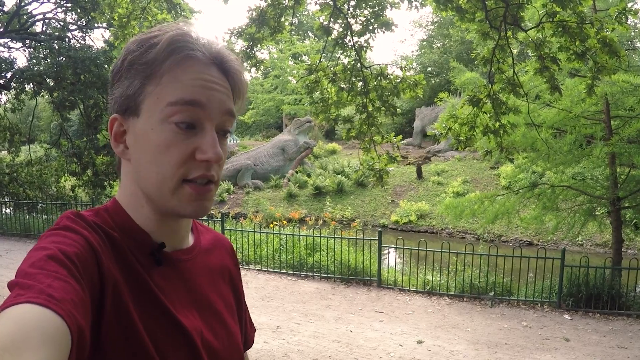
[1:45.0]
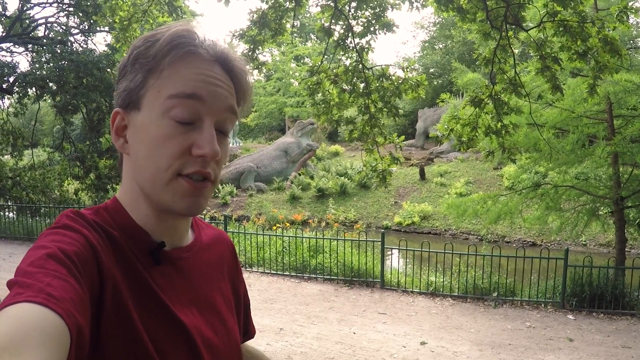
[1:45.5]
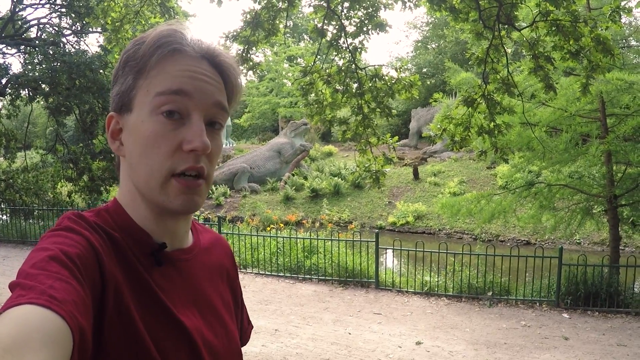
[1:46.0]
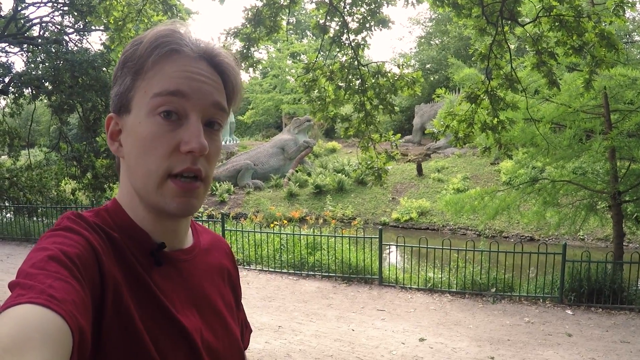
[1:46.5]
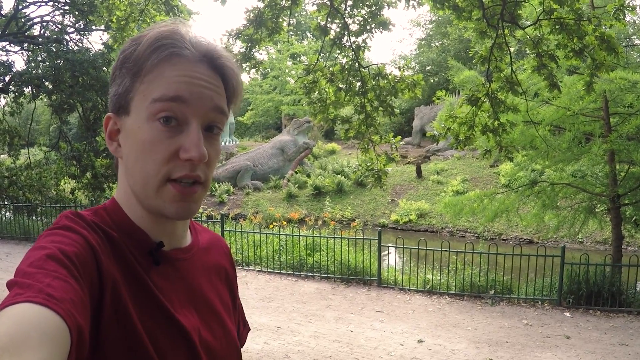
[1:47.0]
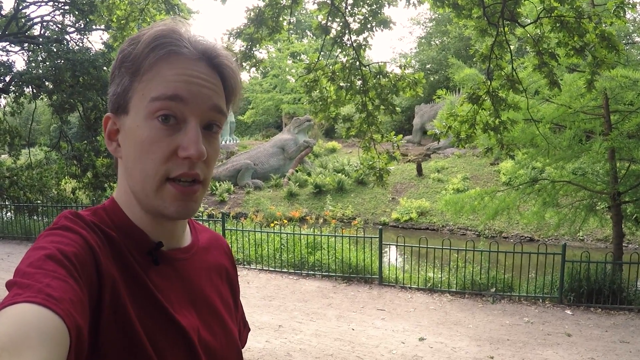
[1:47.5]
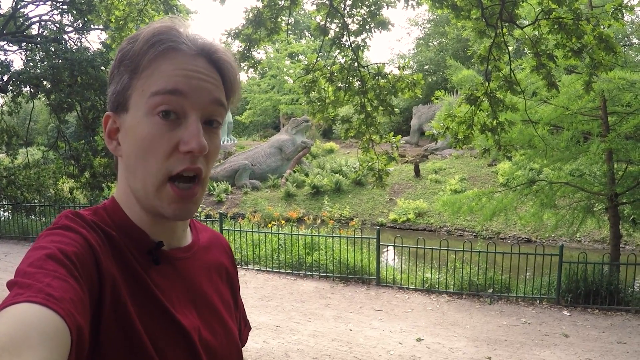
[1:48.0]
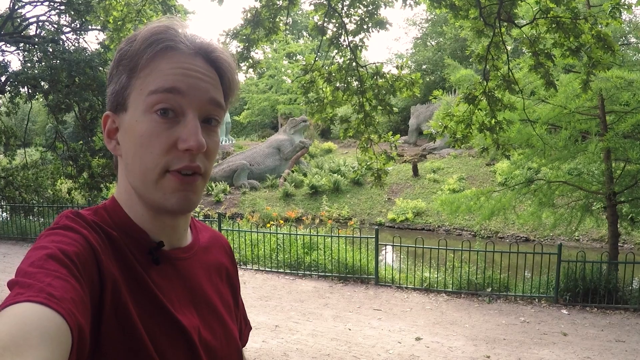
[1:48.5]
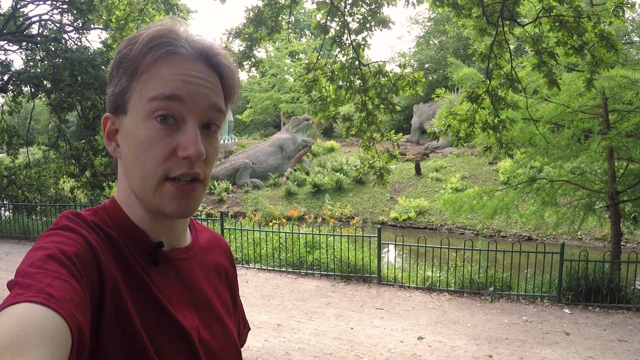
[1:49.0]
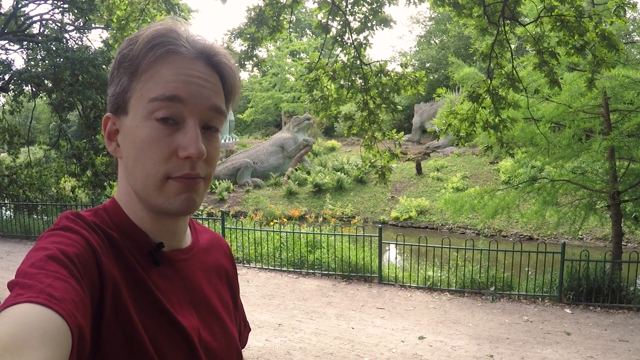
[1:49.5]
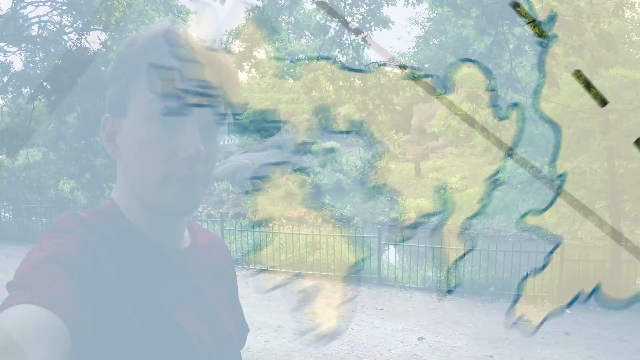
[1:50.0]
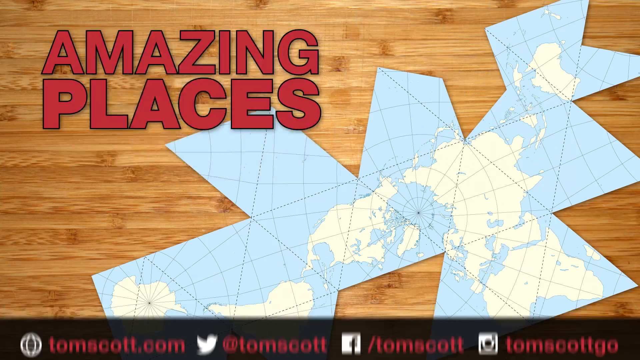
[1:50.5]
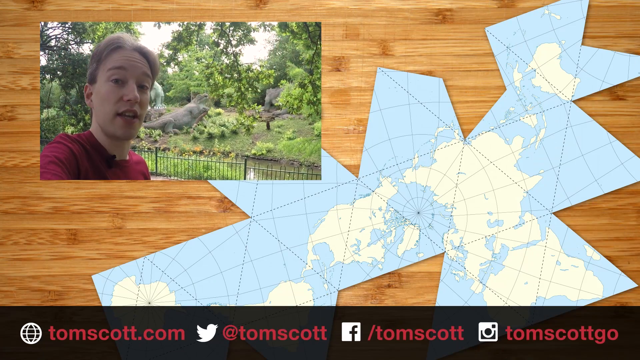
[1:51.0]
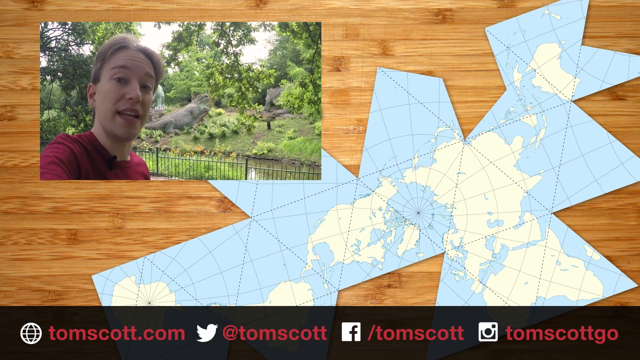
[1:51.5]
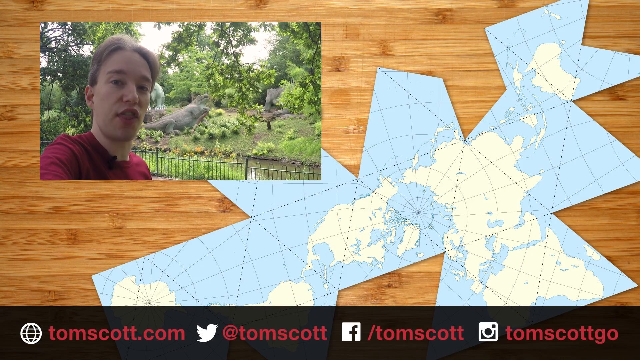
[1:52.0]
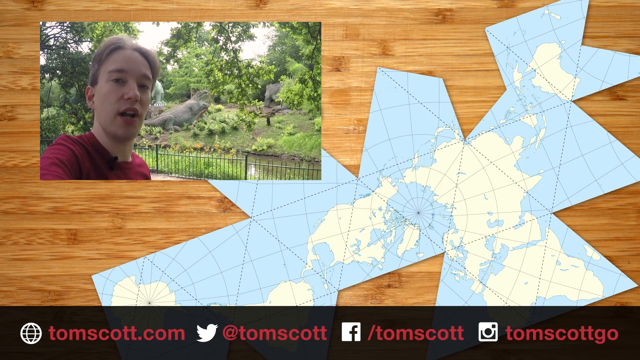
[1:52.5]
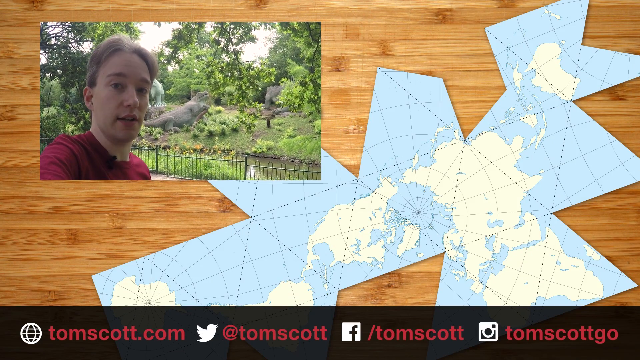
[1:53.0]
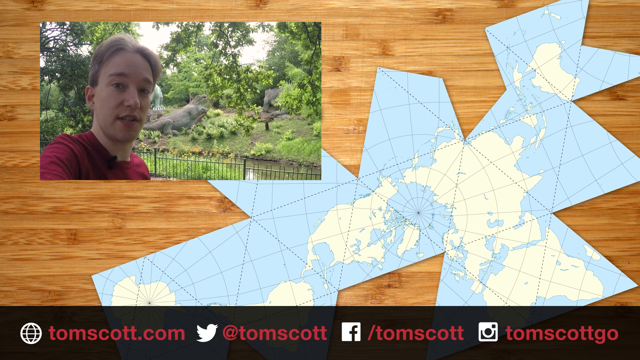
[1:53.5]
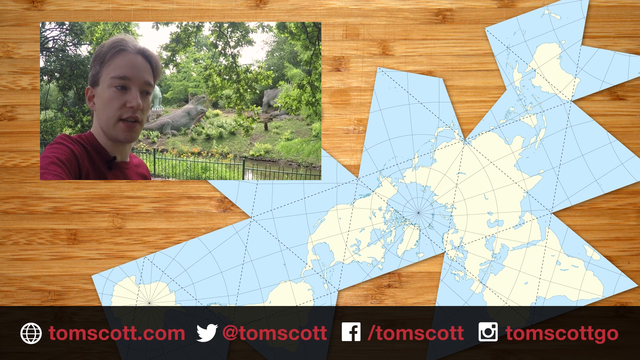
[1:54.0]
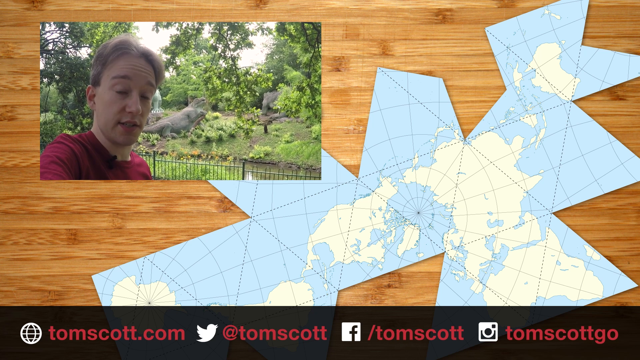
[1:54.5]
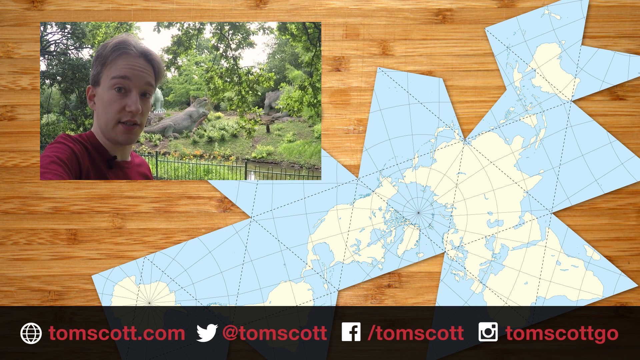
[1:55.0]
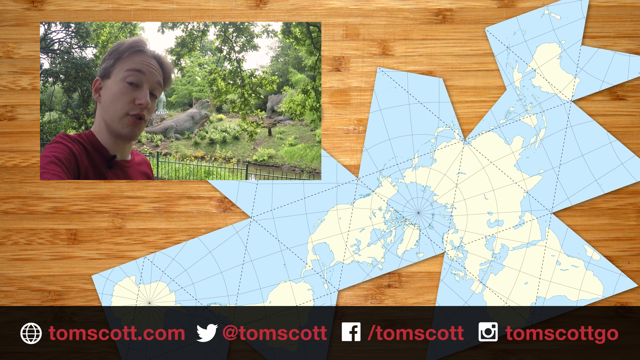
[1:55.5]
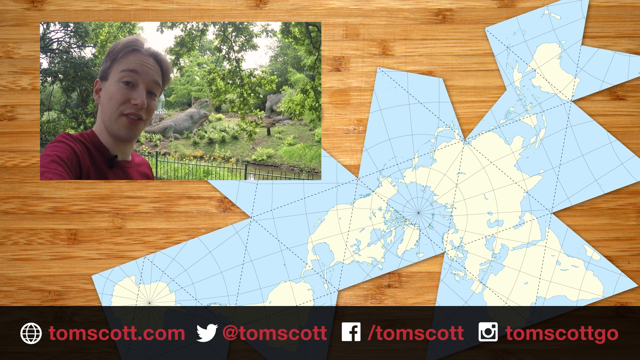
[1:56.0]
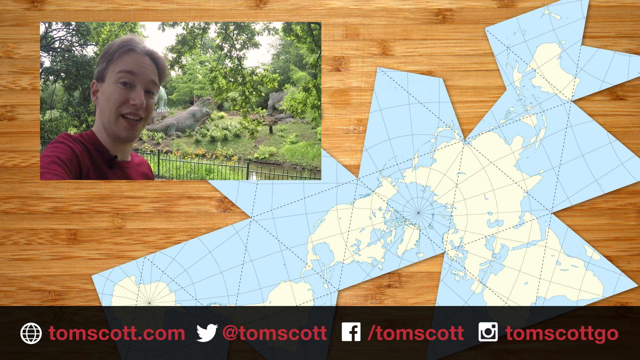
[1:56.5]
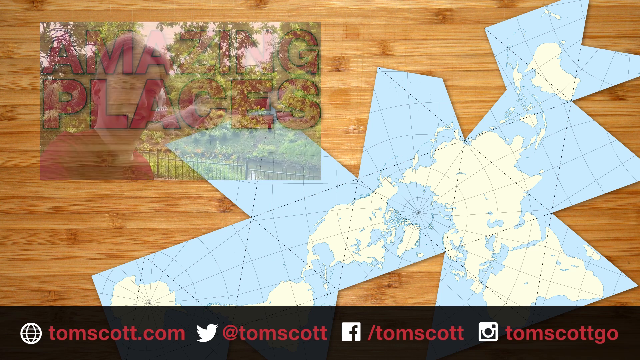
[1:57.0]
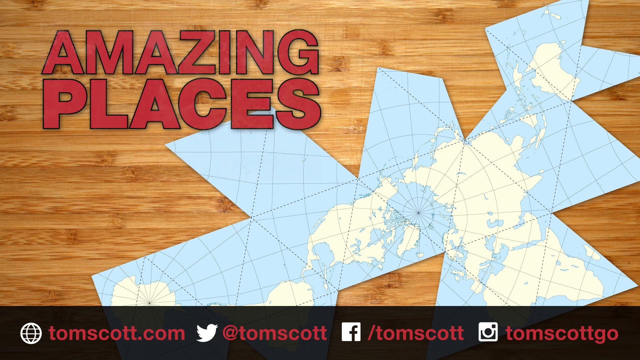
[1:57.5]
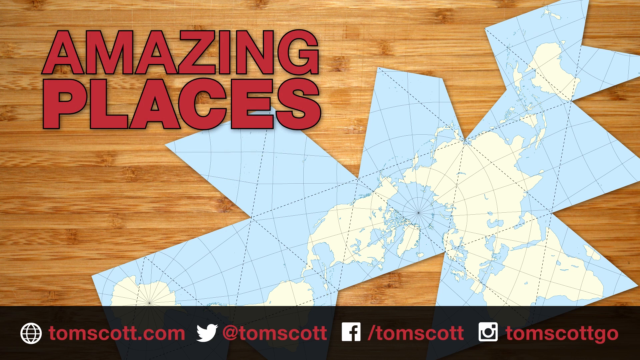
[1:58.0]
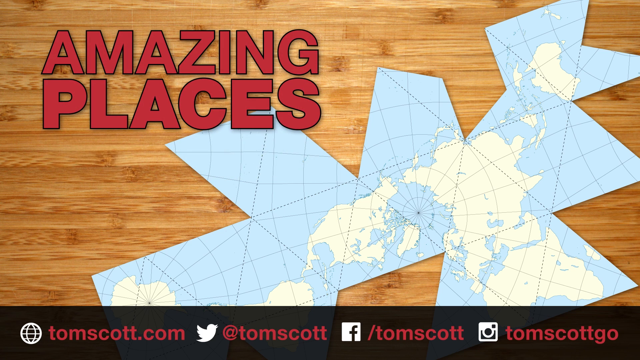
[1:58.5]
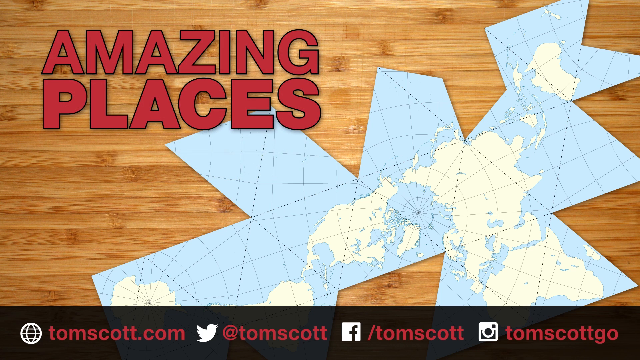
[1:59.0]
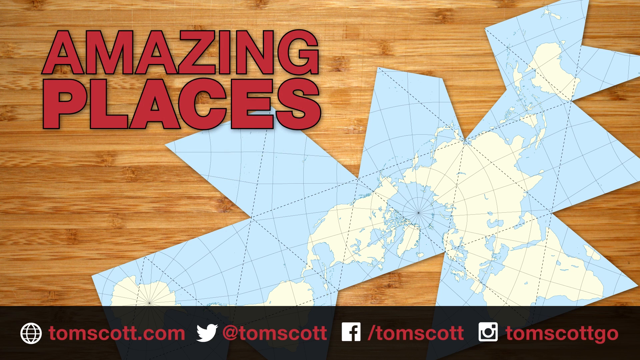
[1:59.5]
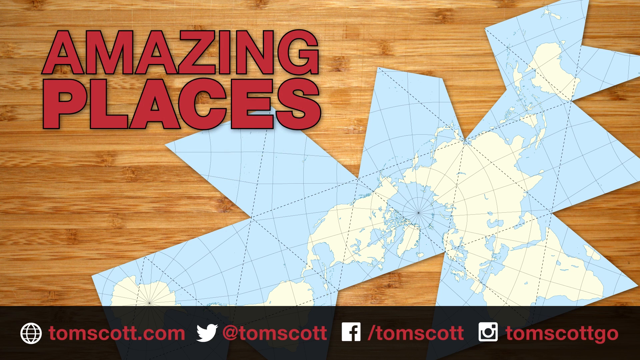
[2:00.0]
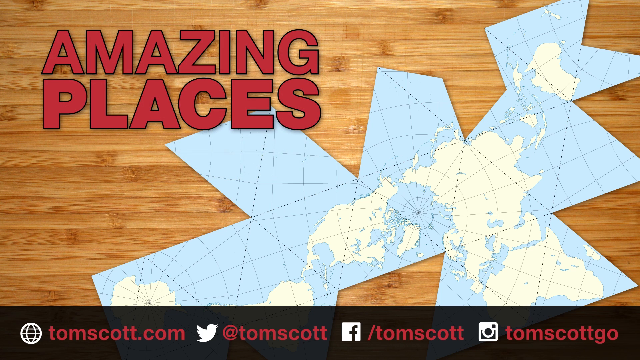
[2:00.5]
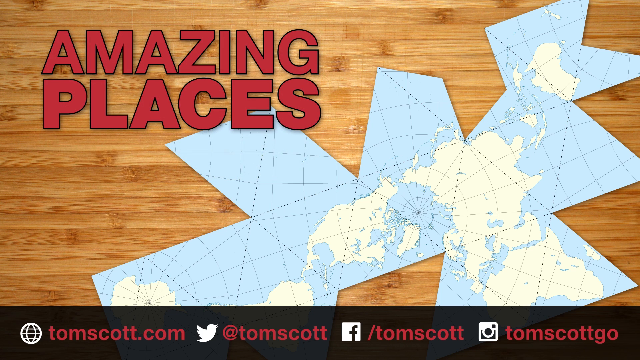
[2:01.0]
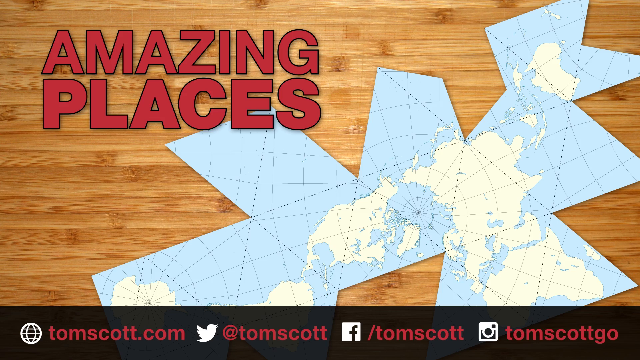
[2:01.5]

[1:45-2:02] The presenter speaks to the camera, standing in an outdoor park with displays of dinosaur statues in a lush green setting. He wears a short-sleeved red t-shirt and has short dark blonde hair. As he finishes speaking, the shot of him fades into a small video thumbnail and a new background appears with "Amazing Places" in the upper left-hand corner of the screen. It shows an animated map of the world flattened out into triangular pieces, with a small picture of his face in a circle on top of the map. On this end screen, a thumbnail video of him speaking is in the upper left-hand corner, and on the right-hand side are two new thumbnail videos, presumably of other videos from Amazing Places. The first says "Null Island the place that doesn't exist" and the bottom one says "after 10 years it's time to stop weekly videos, goodbye but probably not forever." The video then comes to a close.